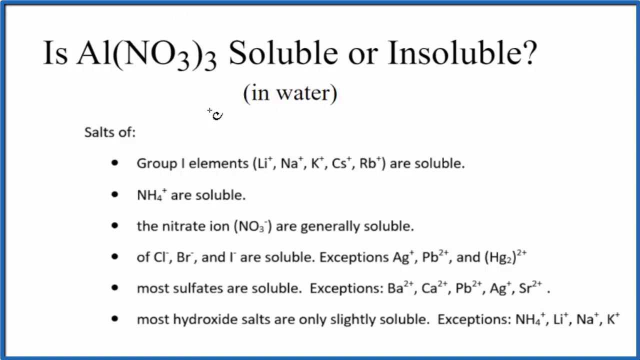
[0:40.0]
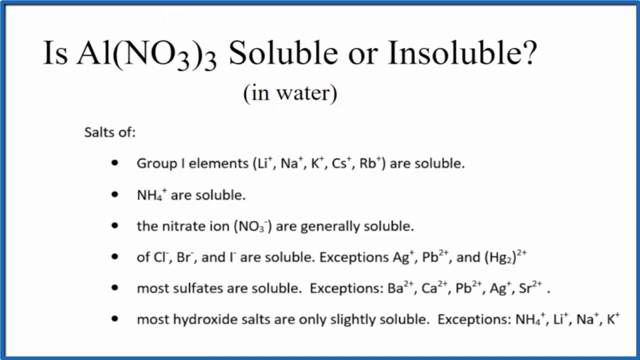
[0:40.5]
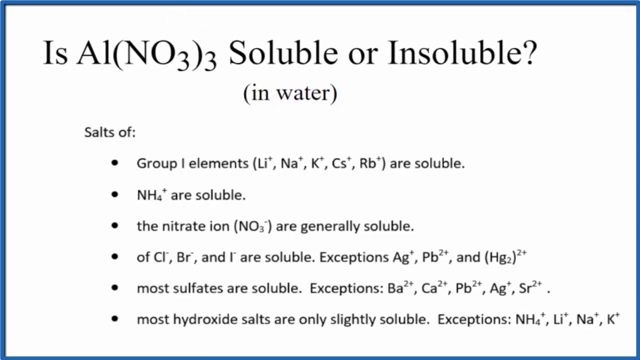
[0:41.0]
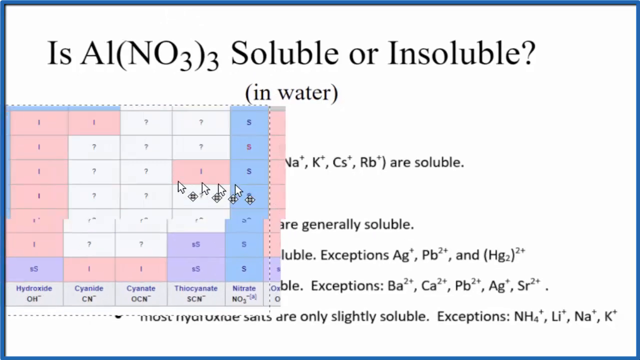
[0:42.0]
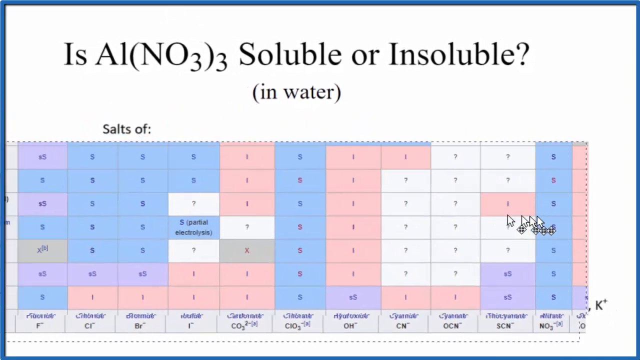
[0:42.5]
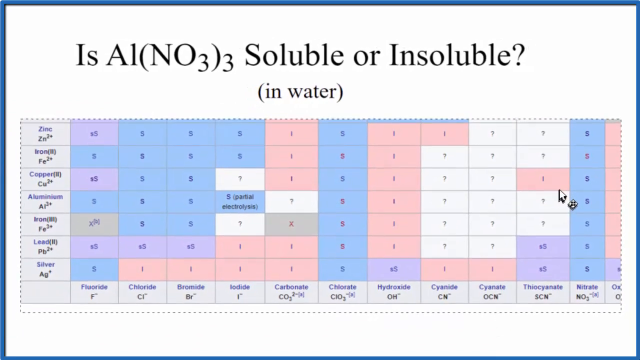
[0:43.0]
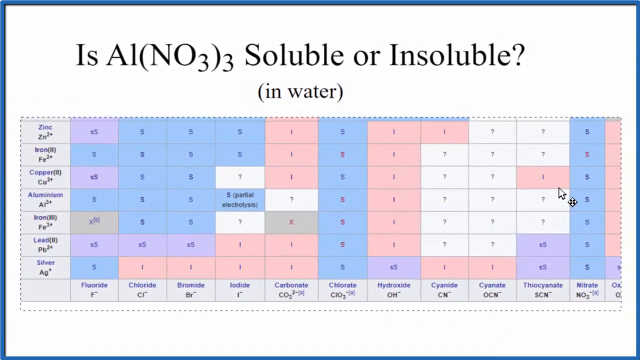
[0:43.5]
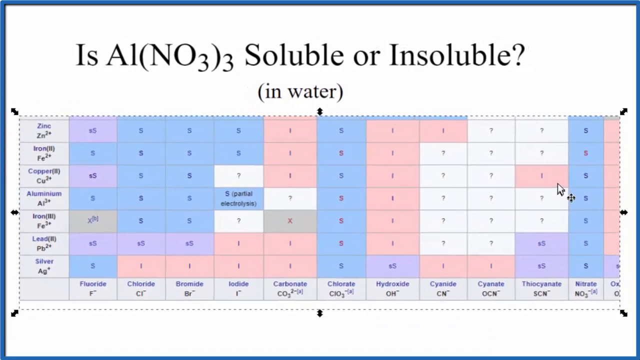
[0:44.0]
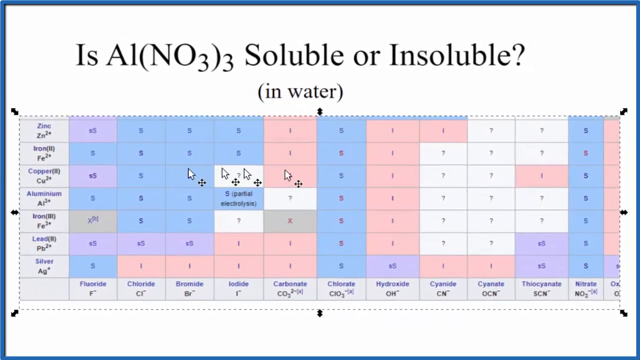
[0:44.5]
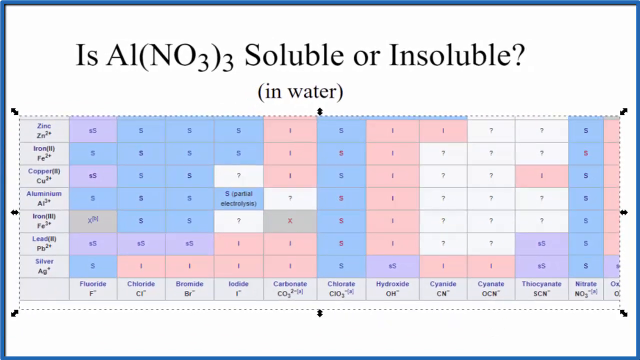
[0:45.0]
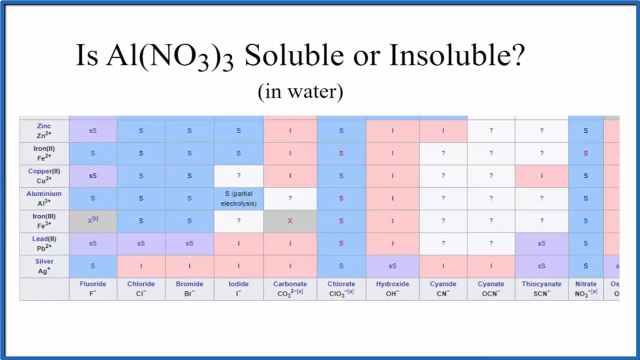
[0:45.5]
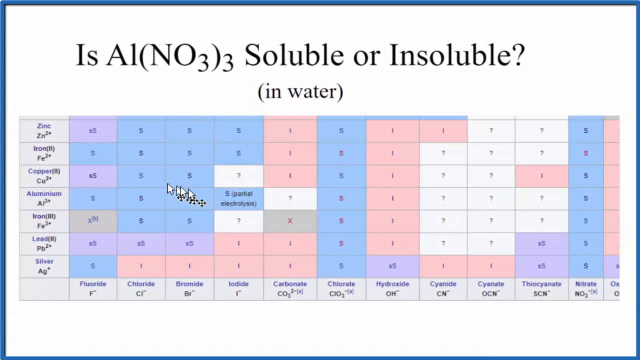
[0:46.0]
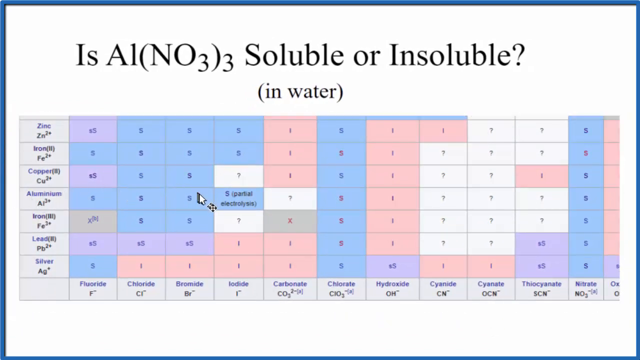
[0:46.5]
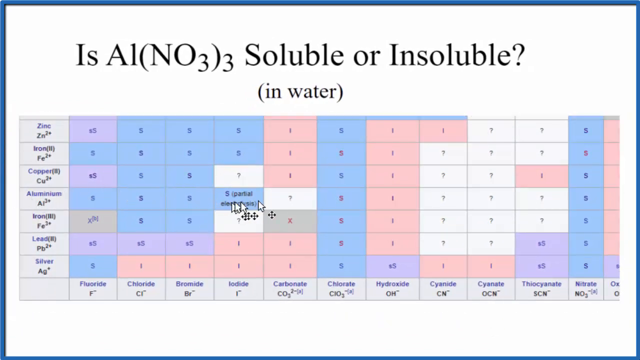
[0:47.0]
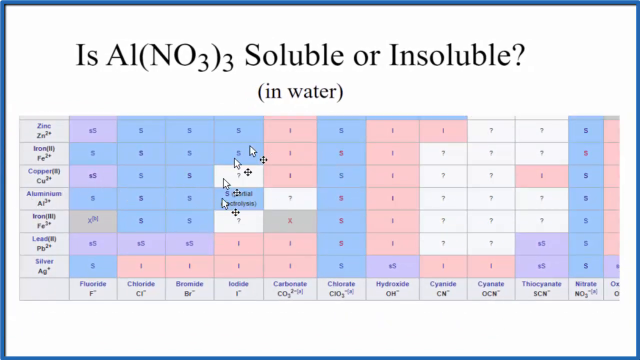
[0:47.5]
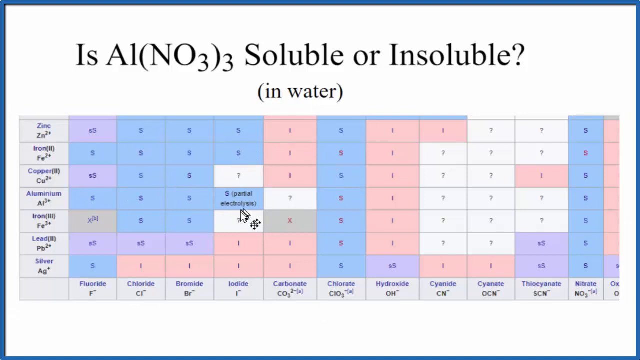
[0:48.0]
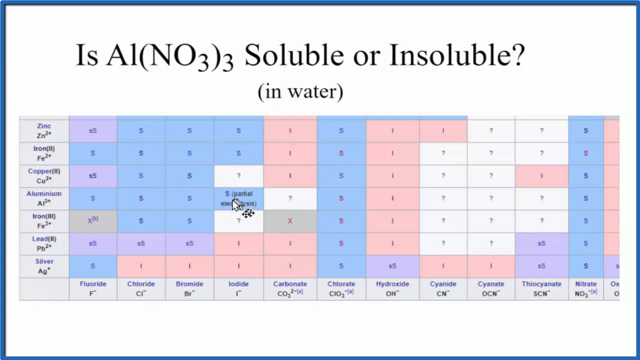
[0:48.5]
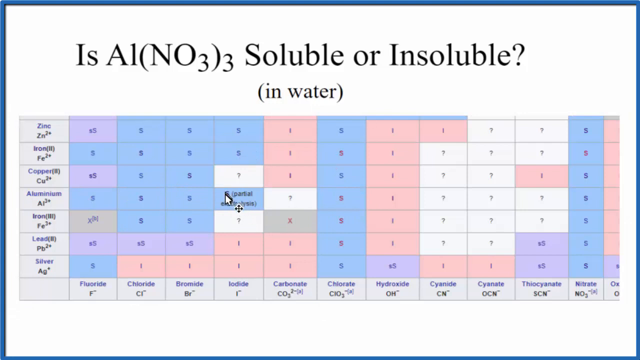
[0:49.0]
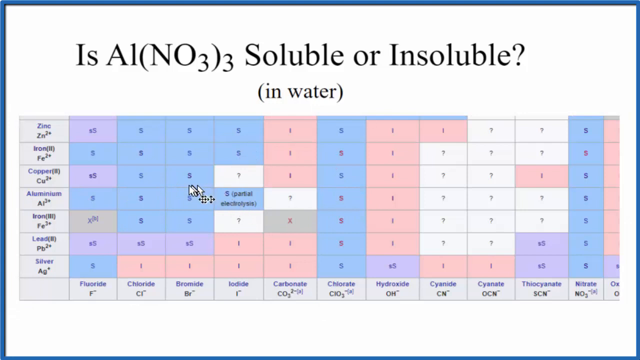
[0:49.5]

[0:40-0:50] The cursor suddenly disappears and a screenshot slides across the bottom part of the screen. The title at the top is still visible, reading "is A1(NO3)3 soluble or insoluble (in water)", and there is now a table underneath. The table is low resolution and blurry, so its details are not clear, but down the left-hand side it lists zinc, iron, copper, aluminium, iron, lead and silver, and across the bottom it lists fluoride, chloride, bromide, iodide, carbonate, hydroxide, cyanide, cyanate, thiocyanate and nitrate. Various numbers, letters and symbols make up the rest of the table.